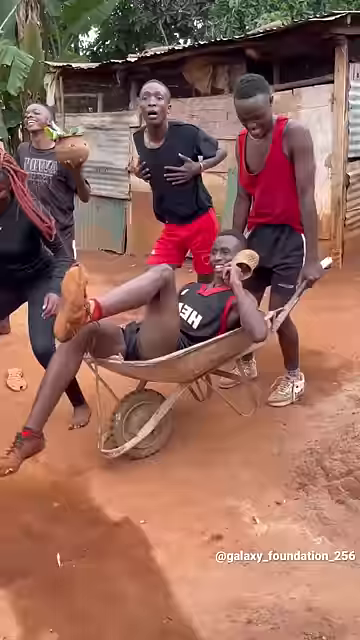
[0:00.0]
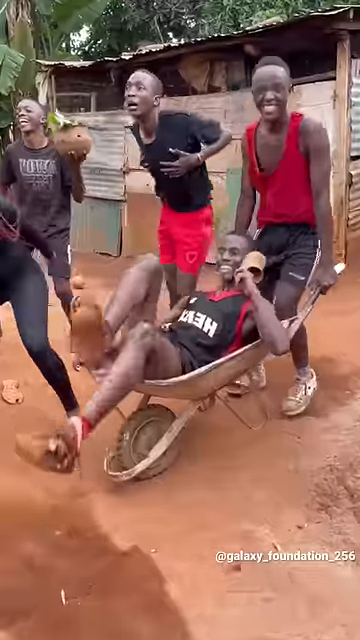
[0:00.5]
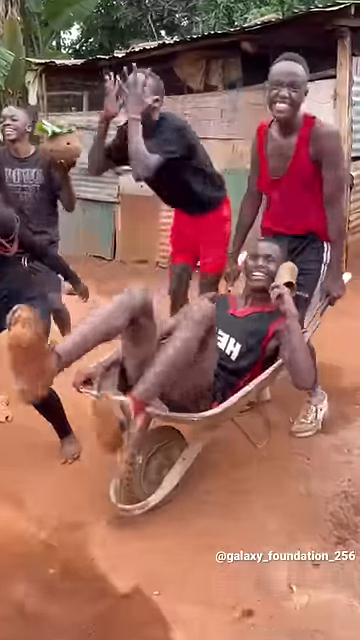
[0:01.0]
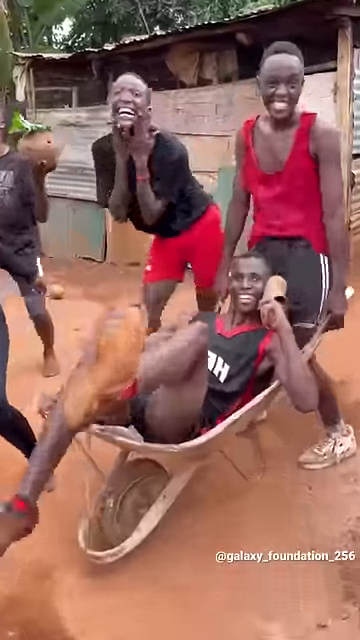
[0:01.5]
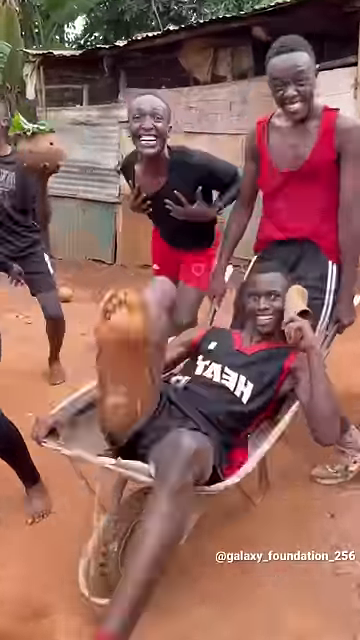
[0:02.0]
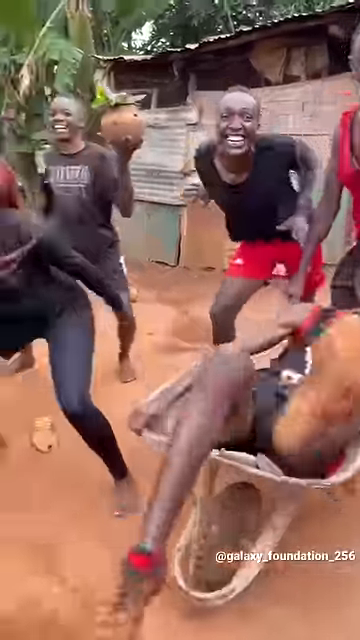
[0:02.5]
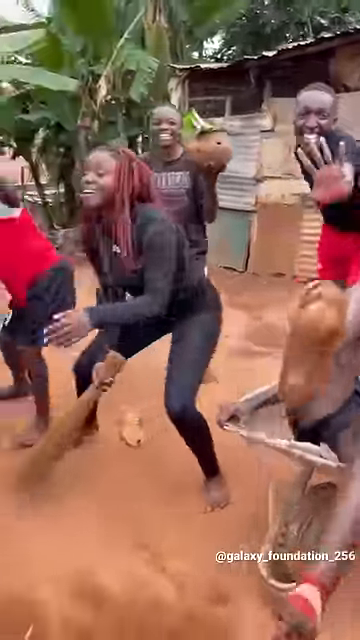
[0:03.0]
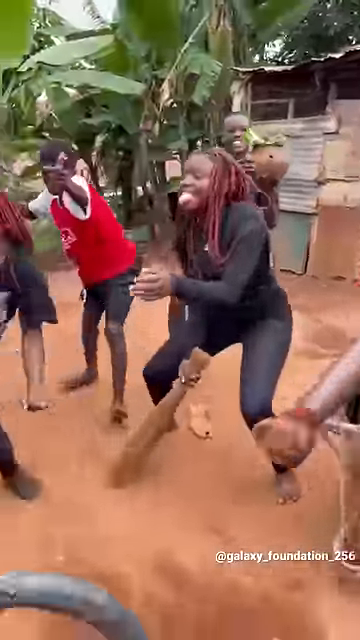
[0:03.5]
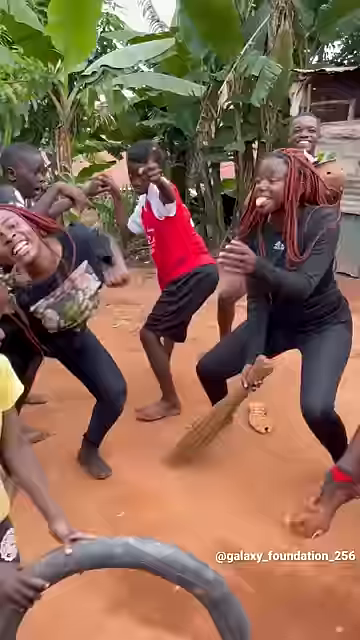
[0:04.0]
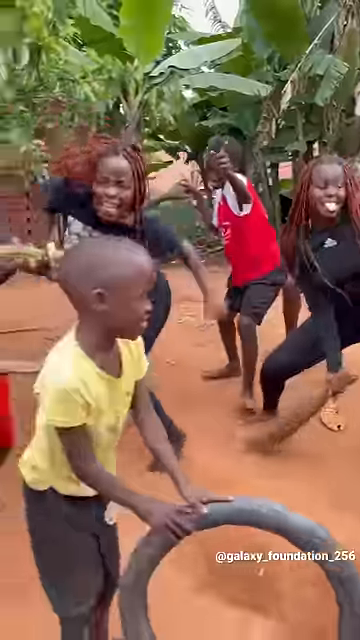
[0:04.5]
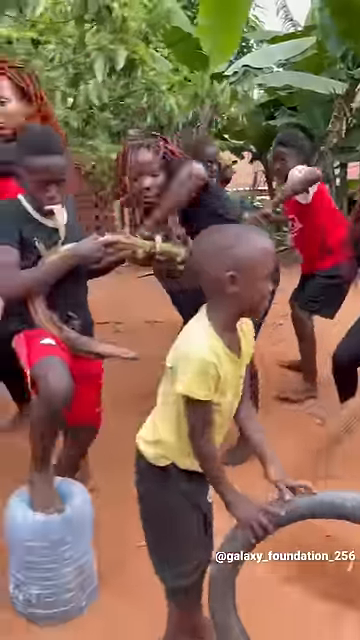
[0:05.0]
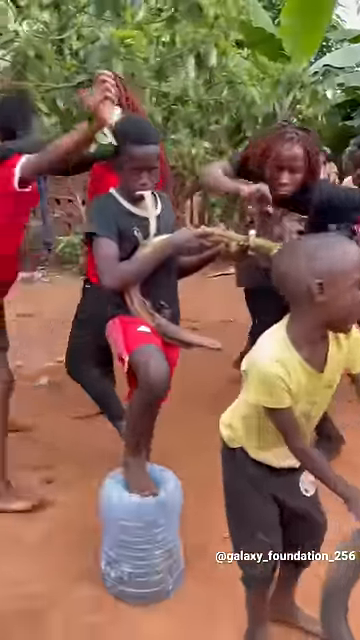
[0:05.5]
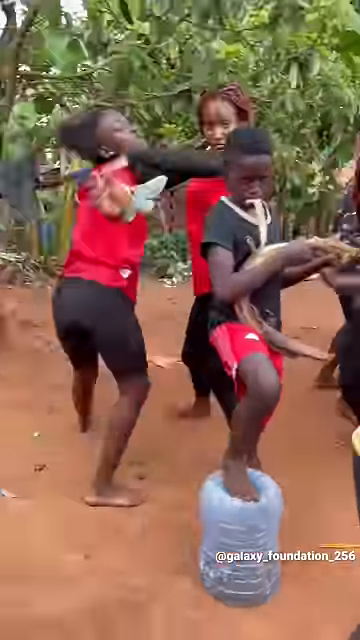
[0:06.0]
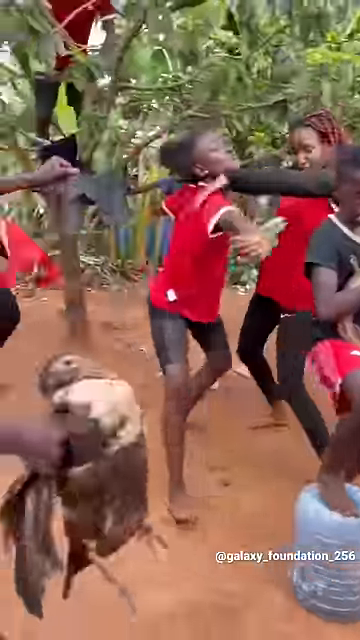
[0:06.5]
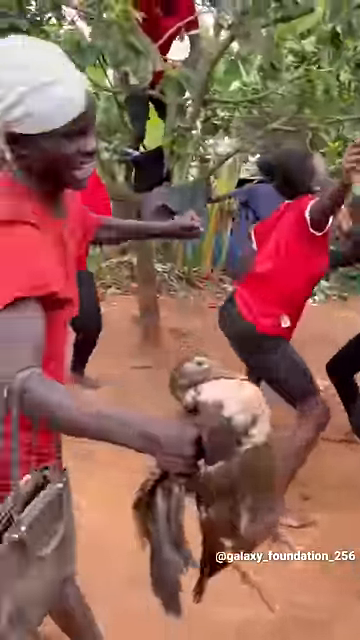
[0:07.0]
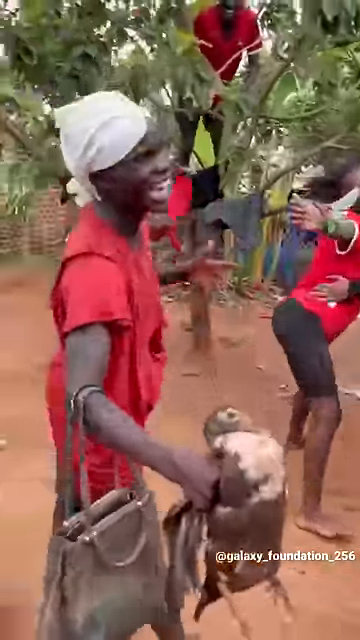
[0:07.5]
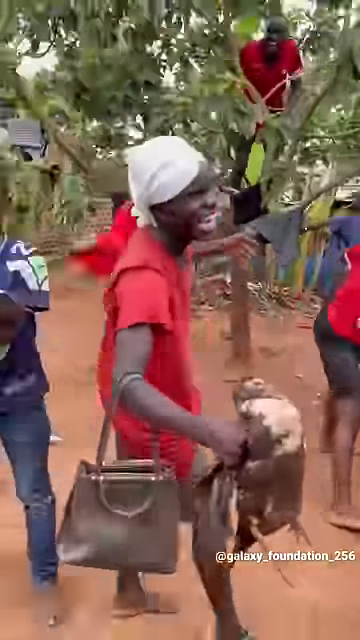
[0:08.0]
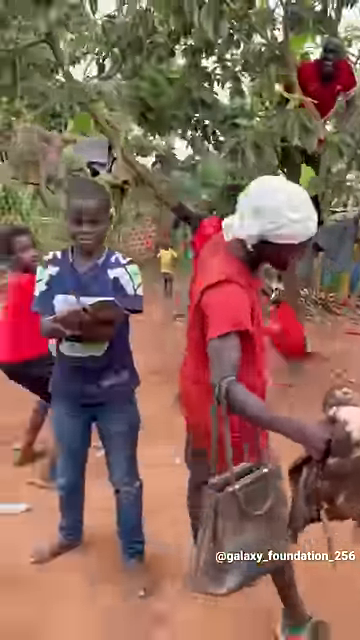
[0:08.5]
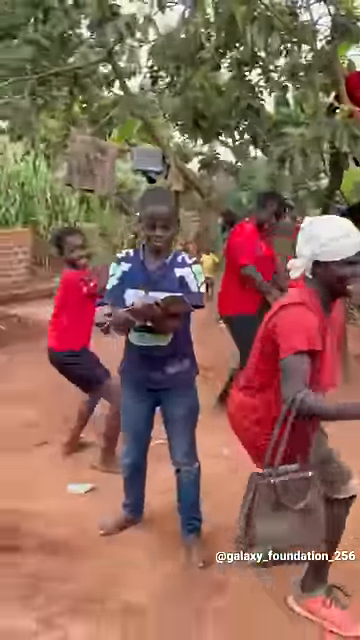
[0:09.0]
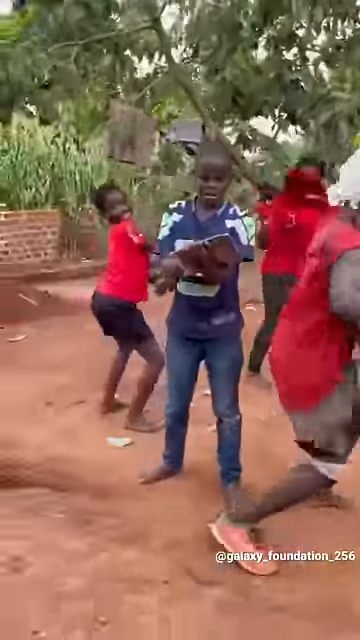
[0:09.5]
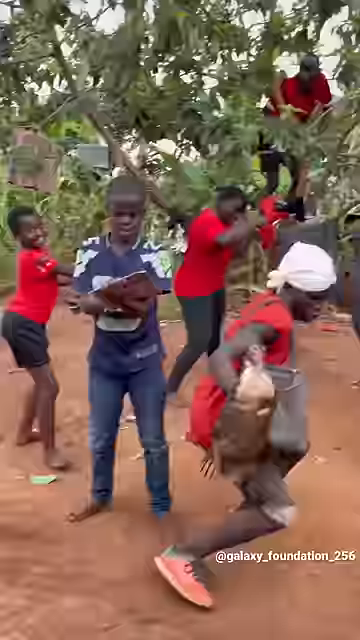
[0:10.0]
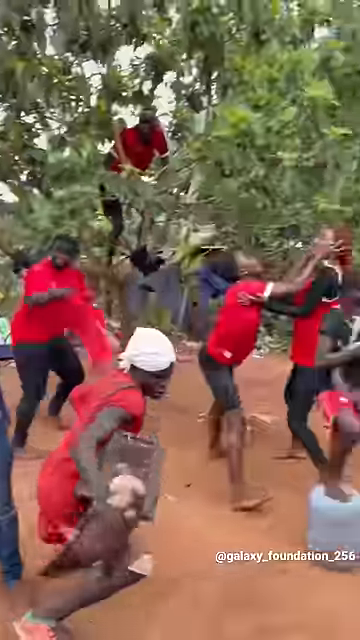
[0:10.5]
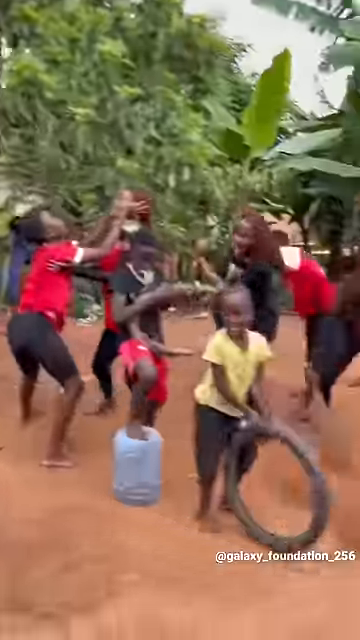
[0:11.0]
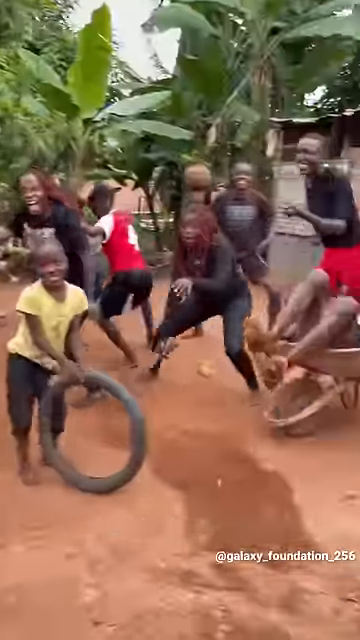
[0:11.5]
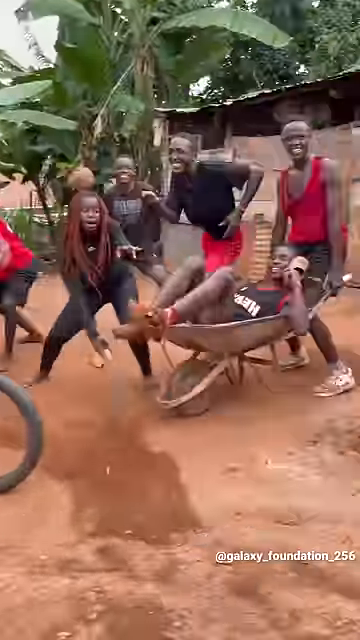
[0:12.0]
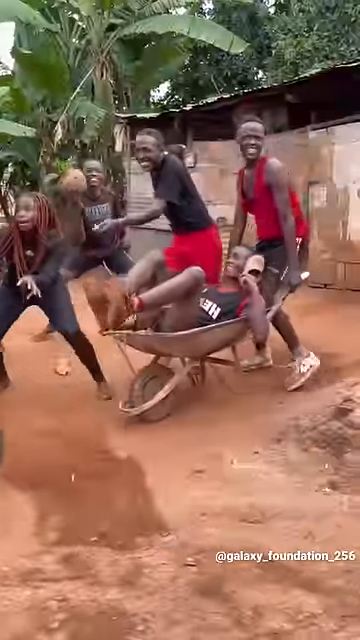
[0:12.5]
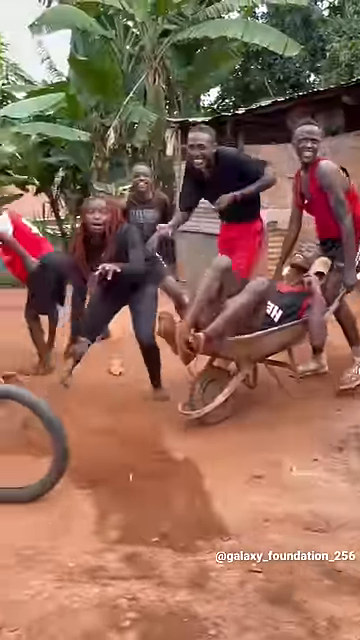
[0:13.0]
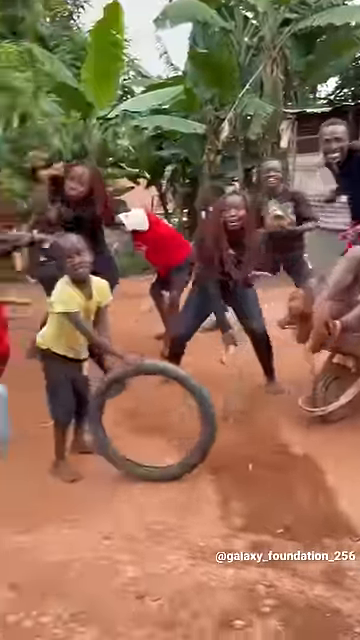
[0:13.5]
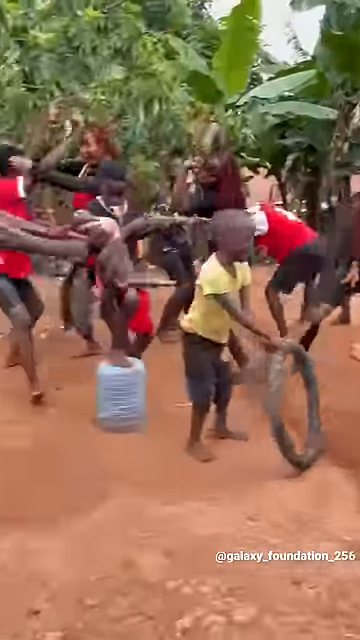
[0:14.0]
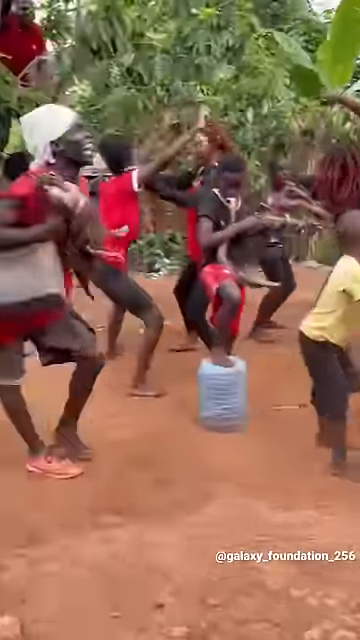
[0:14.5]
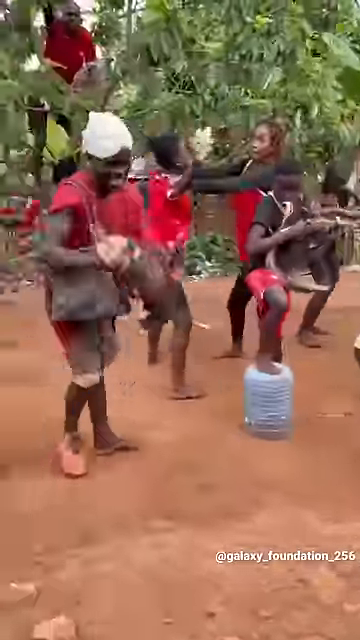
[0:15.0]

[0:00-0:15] A group of young African kids dance, apparently to some sort of music. They wear t-shirts and sports gear, including football jerseys and basketball jerseys. There seems to be a tin shack in the background, along with big-leaf trees, and one kid is in the trees. The kids are very aware of the camera and are dancing and posing for it. One boy is in a wheelbarrow while another lifts the wheelbarrow up. One kid has what looks like a tire tube of some sort, another has some sort of instrument or maybe just a piece of wood, and another is carrying what appears to be a chicken and a purse. They dance with each other and pose for the camera.